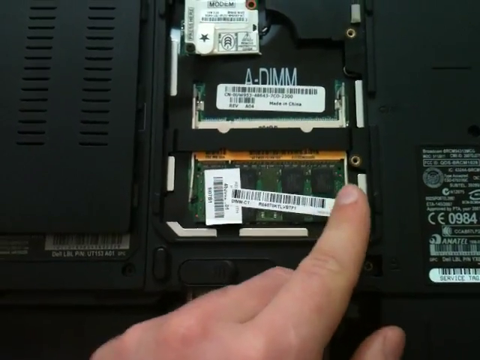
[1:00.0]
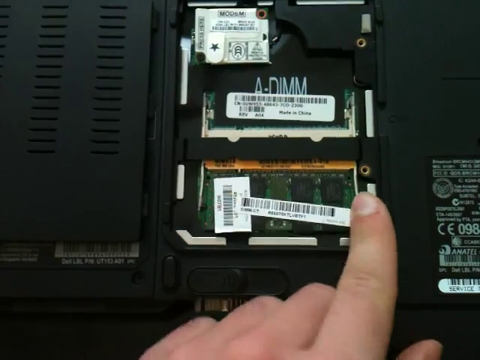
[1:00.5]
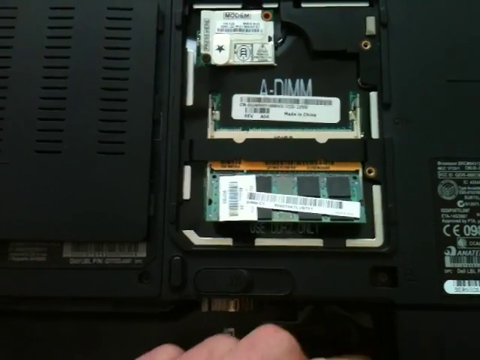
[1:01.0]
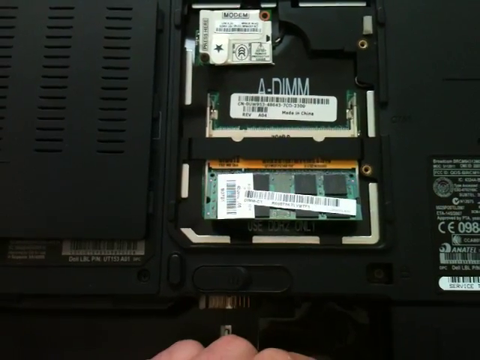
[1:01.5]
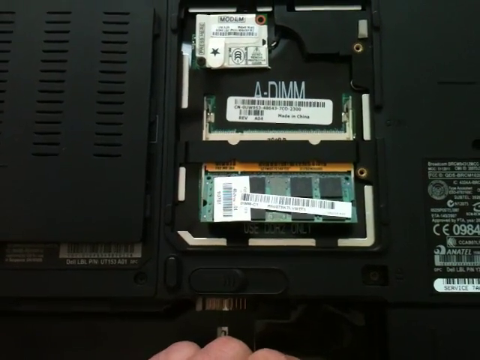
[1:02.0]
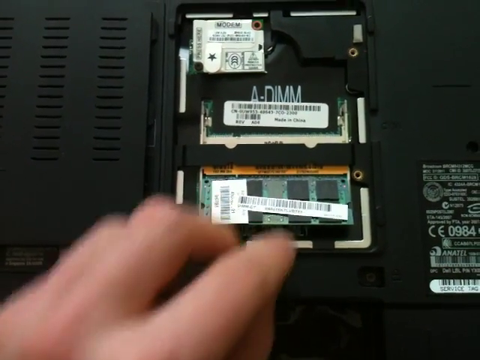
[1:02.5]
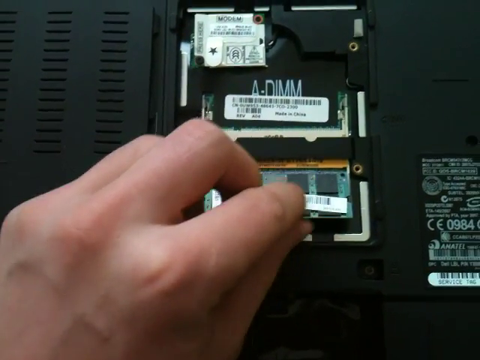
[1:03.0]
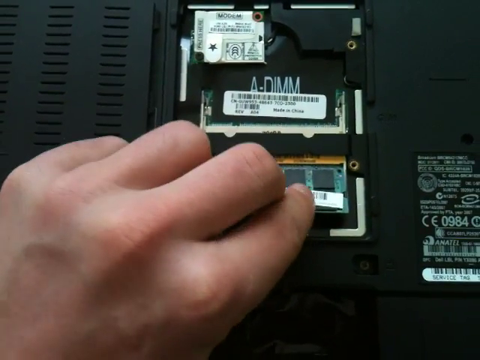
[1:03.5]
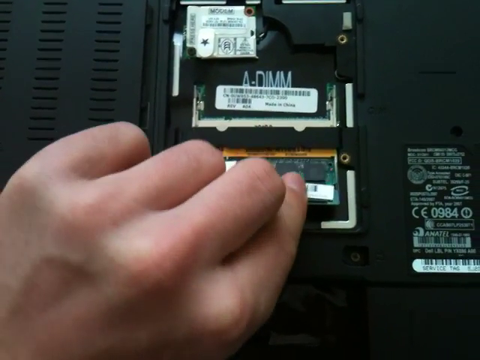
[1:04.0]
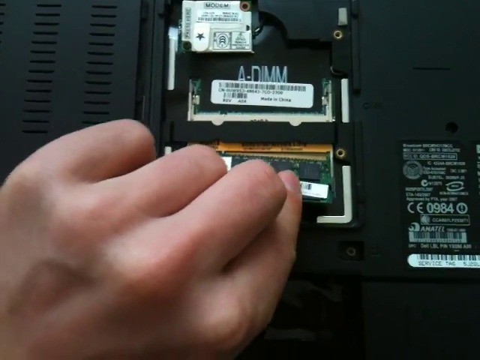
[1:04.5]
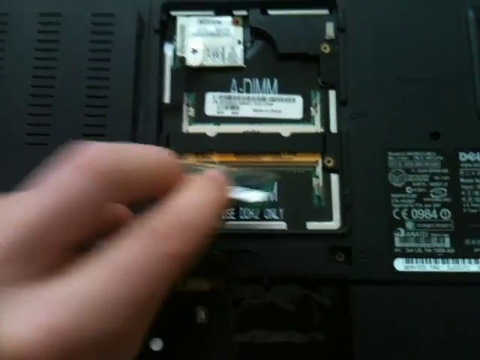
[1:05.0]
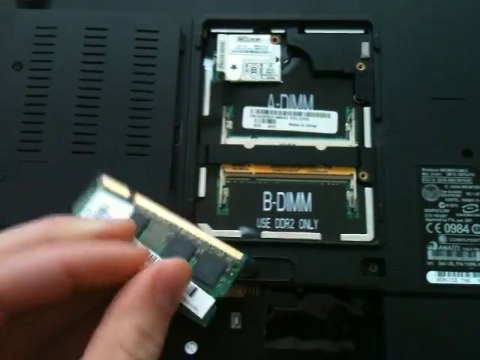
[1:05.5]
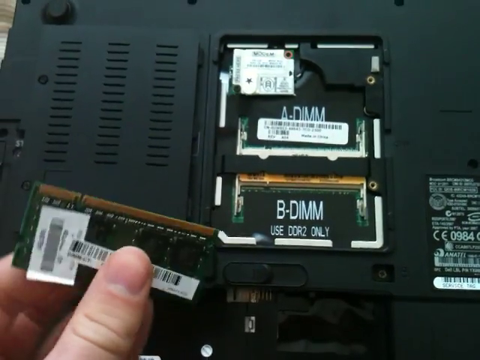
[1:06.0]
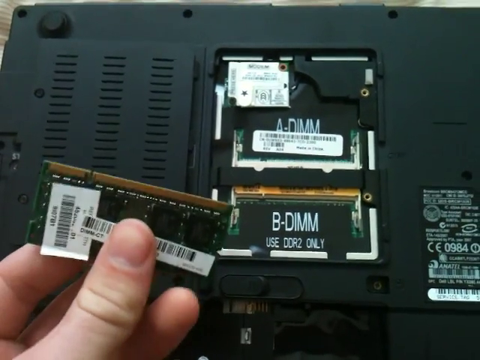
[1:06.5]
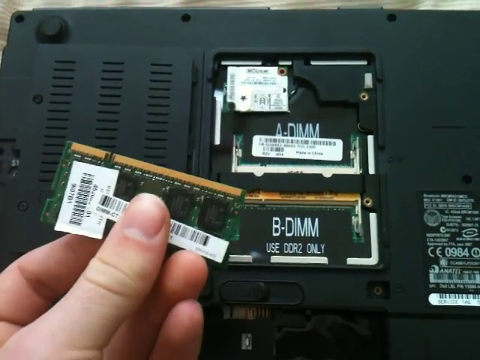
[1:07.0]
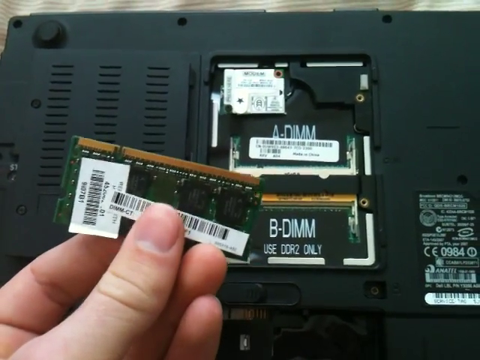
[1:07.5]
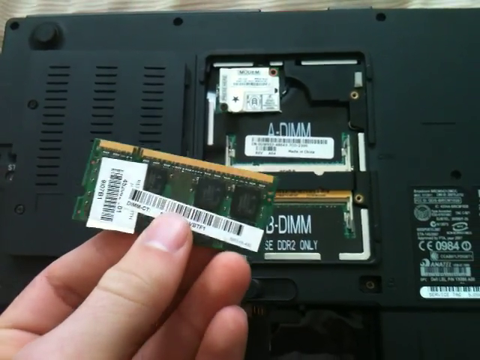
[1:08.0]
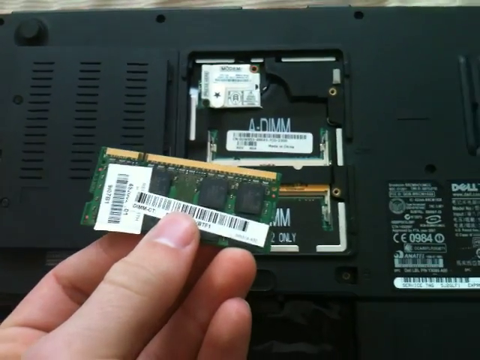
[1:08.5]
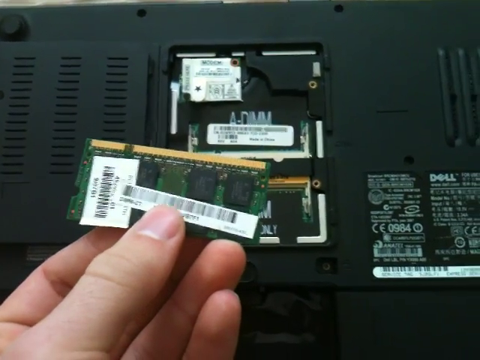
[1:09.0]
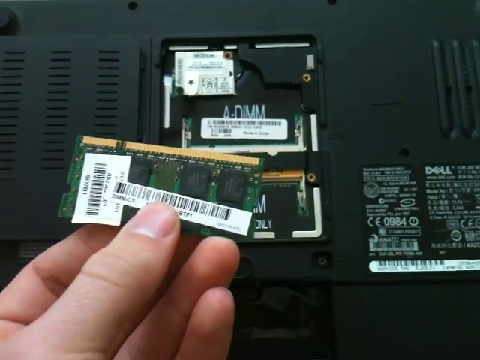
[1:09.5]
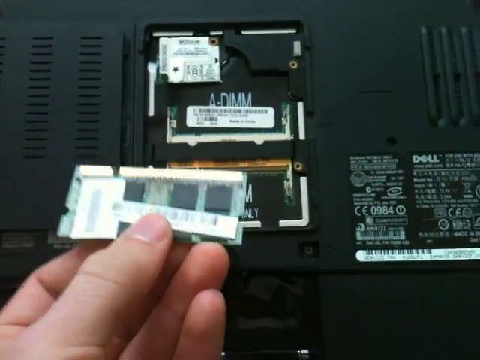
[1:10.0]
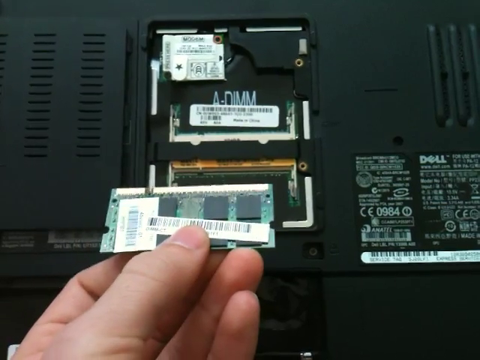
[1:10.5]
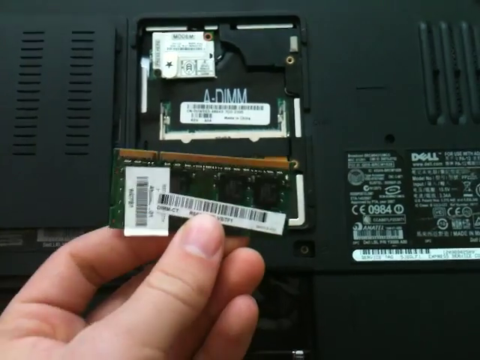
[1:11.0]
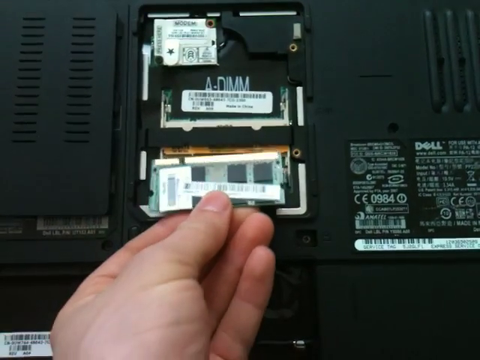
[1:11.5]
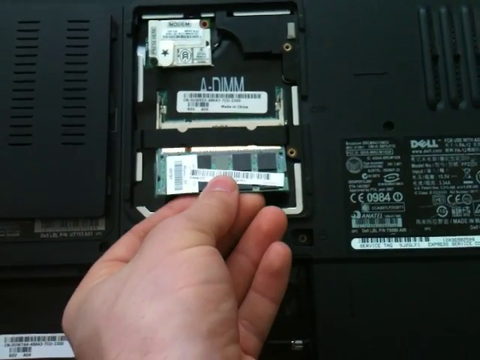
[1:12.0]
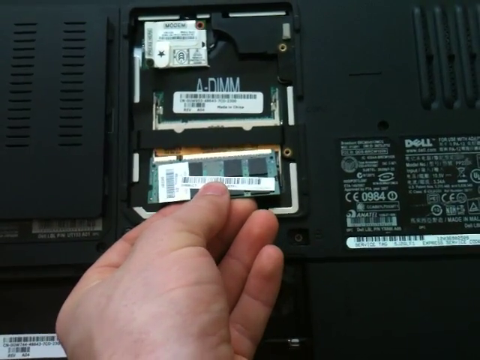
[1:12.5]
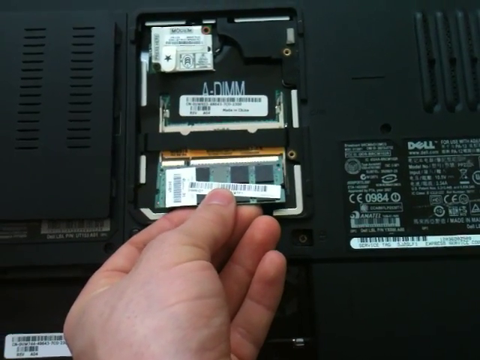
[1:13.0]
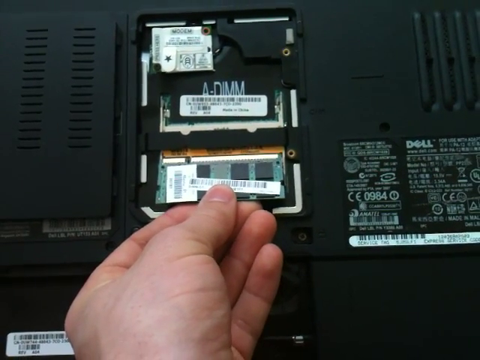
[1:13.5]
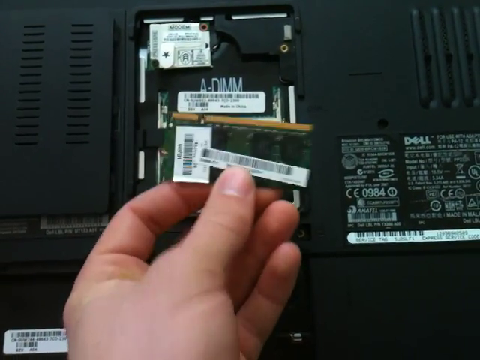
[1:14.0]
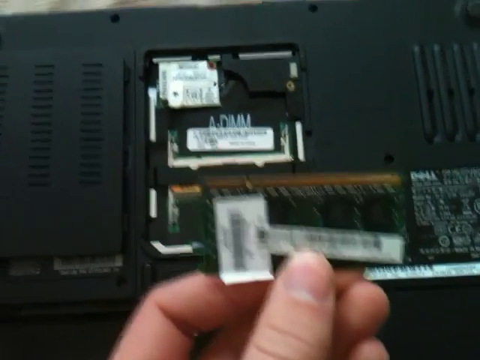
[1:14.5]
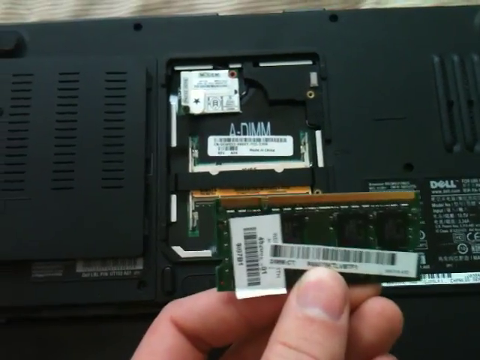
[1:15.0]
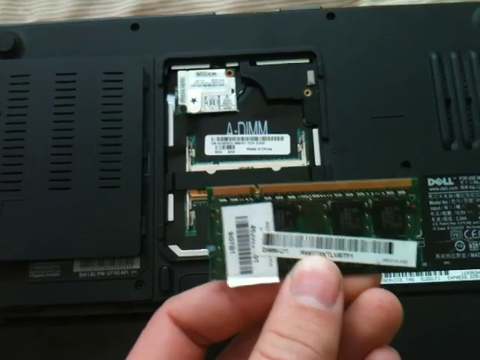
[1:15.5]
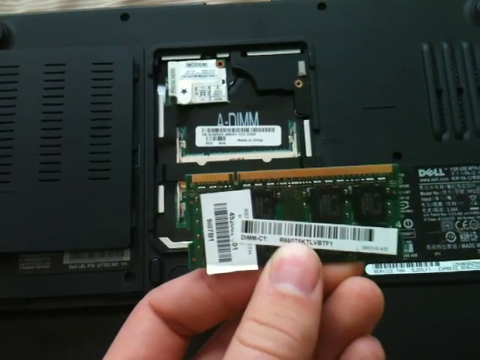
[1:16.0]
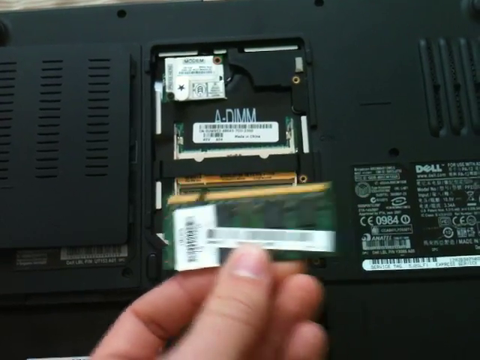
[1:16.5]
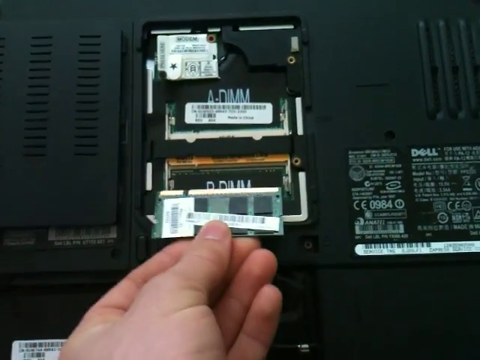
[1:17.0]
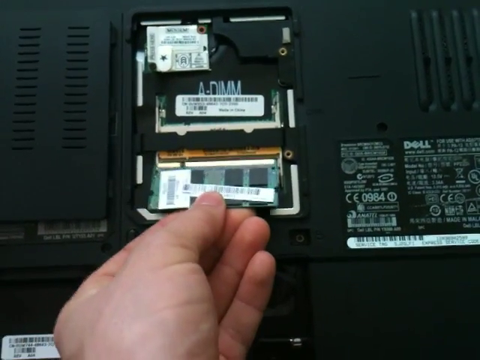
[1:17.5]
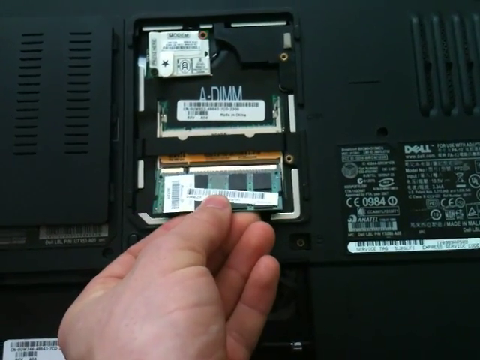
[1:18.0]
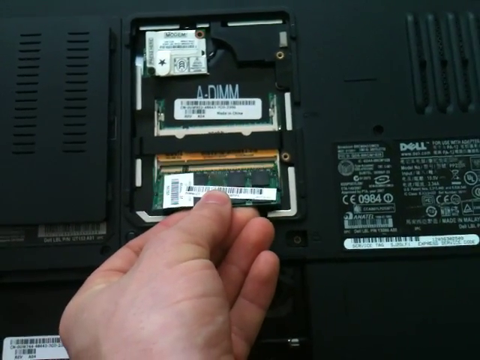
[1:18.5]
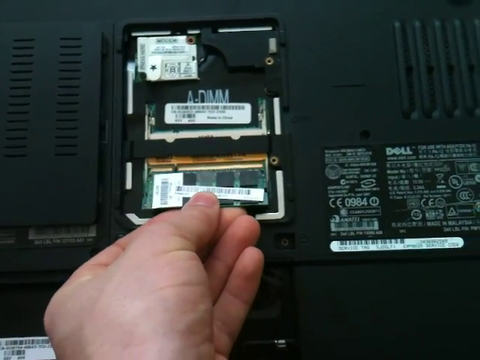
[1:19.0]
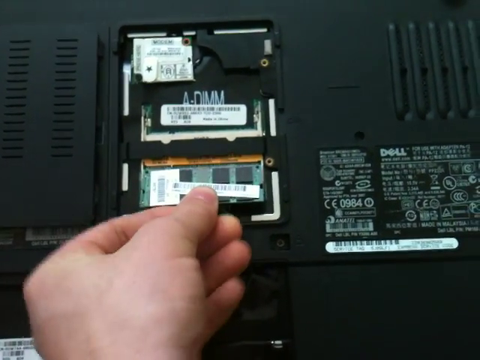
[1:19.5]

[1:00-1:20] The man removes a removable part from inside the opened section of the device, shows it clearly, and then puts it back where it was.